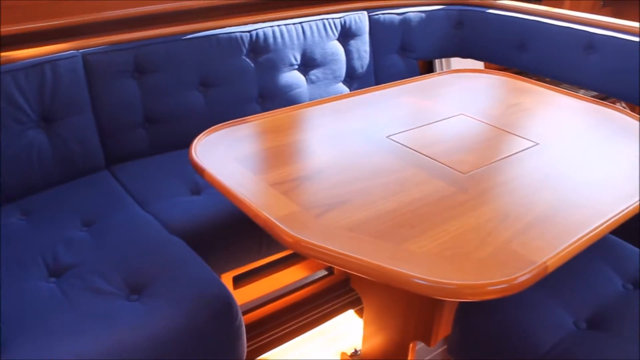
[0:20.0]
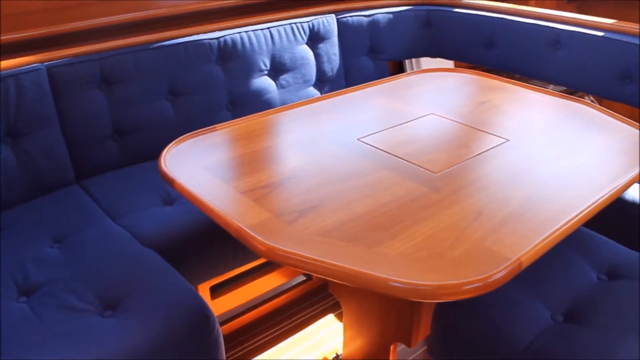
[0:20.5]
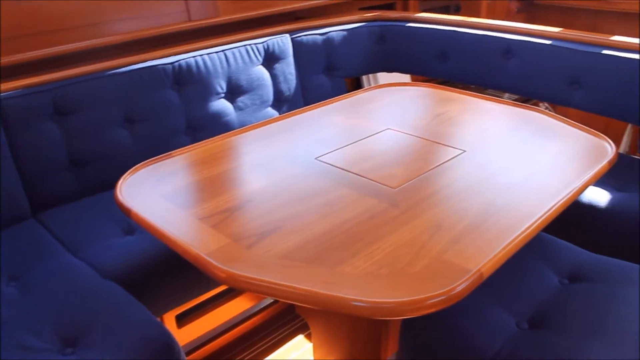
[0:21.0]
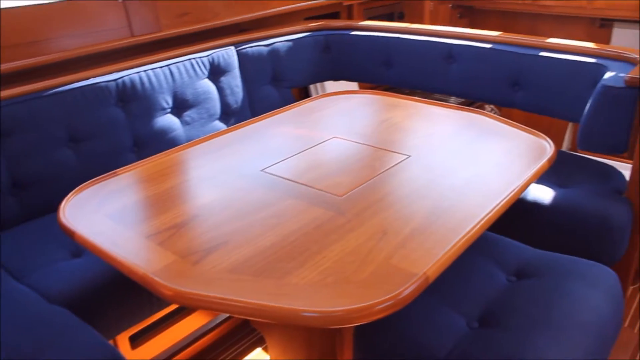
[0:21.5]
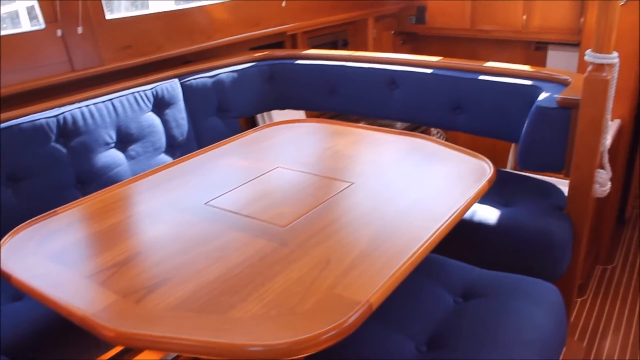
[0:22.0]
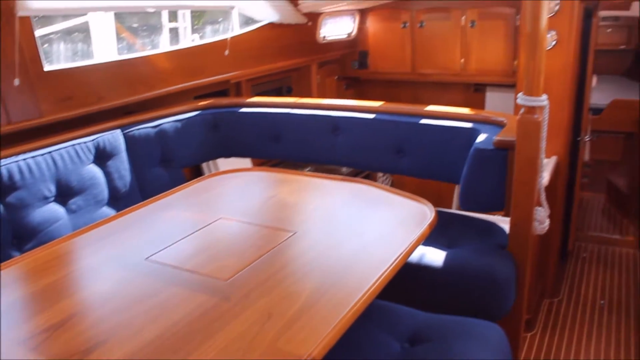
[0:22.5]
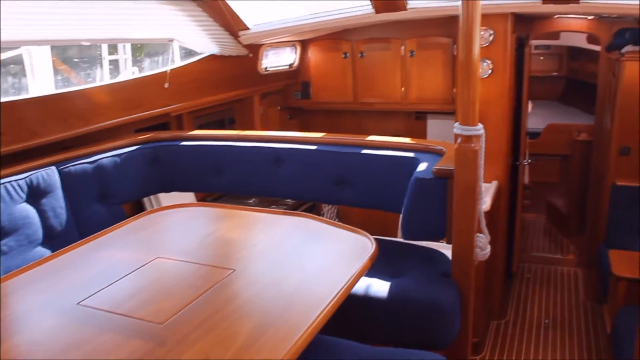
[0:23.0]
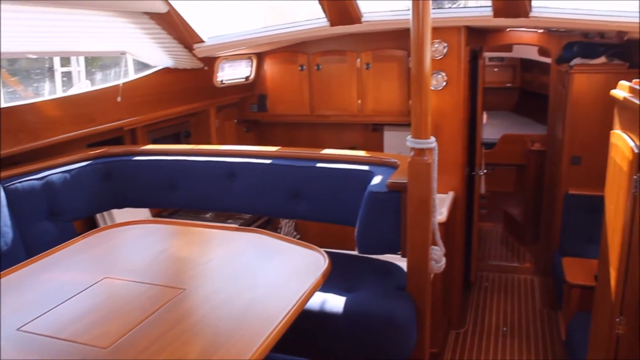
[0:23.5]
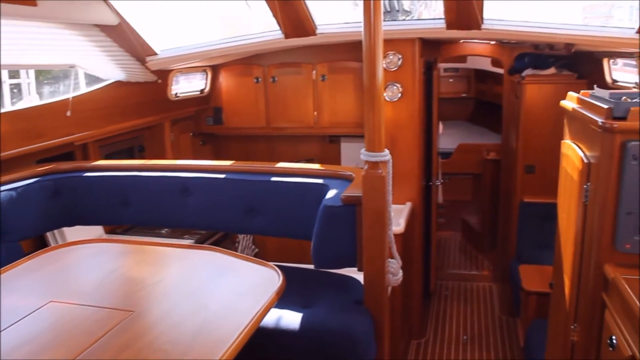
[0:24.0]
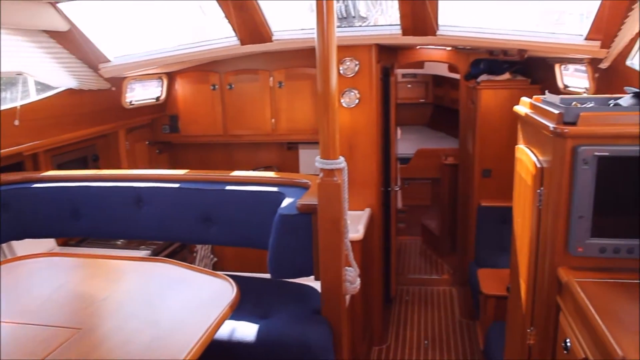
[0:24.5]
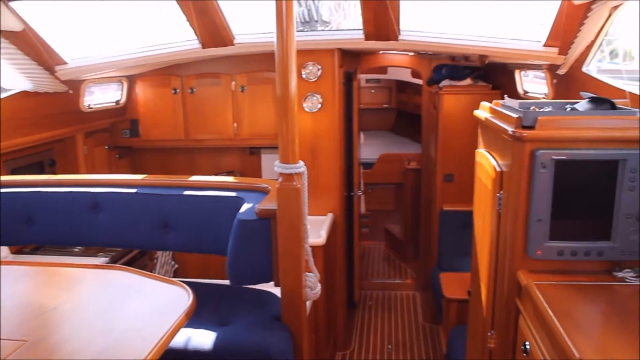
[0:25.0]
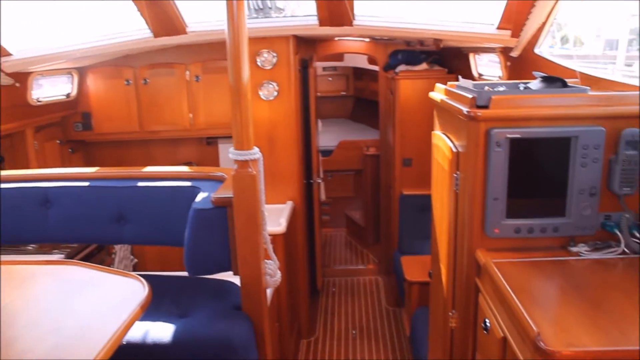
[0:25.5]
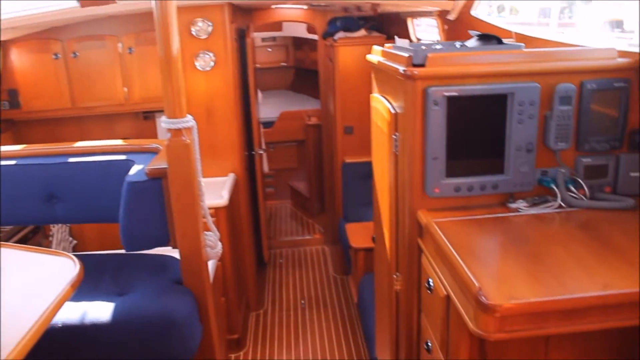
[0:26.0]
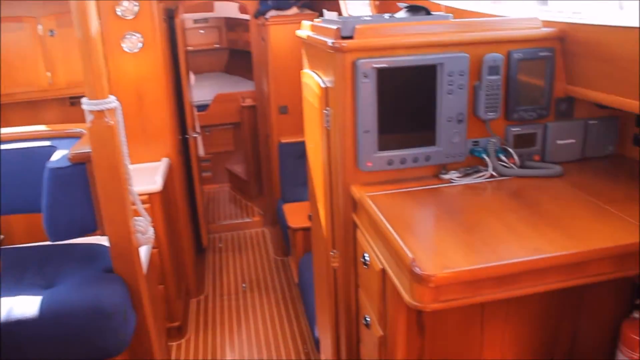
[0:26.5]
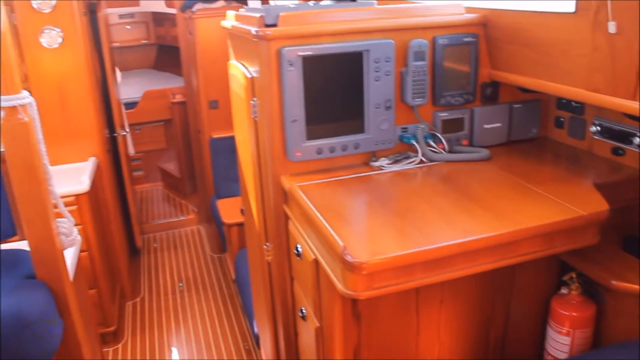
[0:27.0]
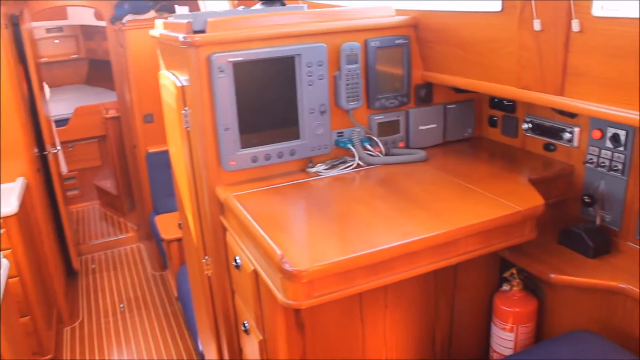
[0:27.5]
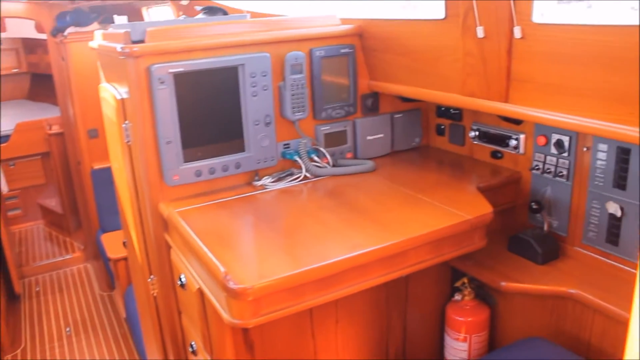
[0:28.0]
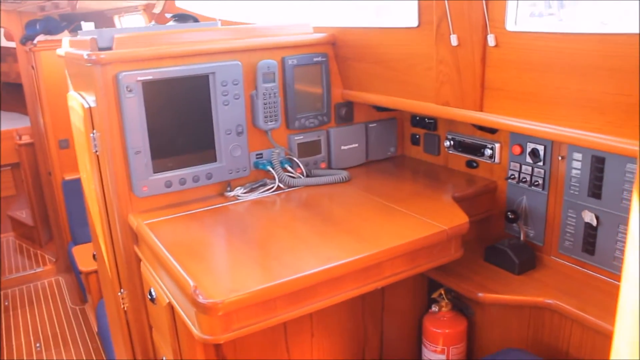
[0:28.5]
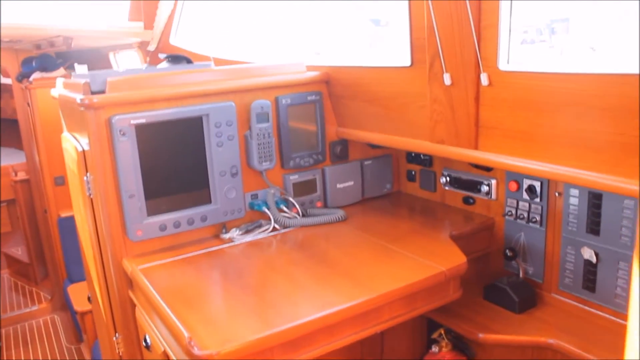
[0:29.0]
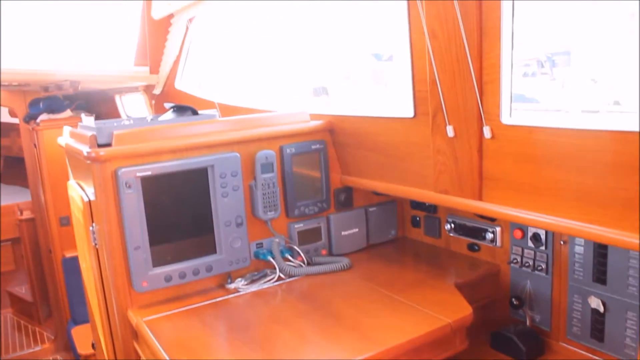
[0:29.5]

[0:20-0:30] A seating arrangement with a wooden table is visible, and the camera goes up to show the inside of the boat. There is a fire extinguisher on the bottom. In the bottom right corner there appears to be some sort of telecommunication center with a phone and a lot of old electronics: what looks like a Palm Pilot next to a very old-looking phone with a cord, and to the right what looks like a radio, resembling the faceplate of a car radio. The camera goes upward to show the boat's windows from the inside.